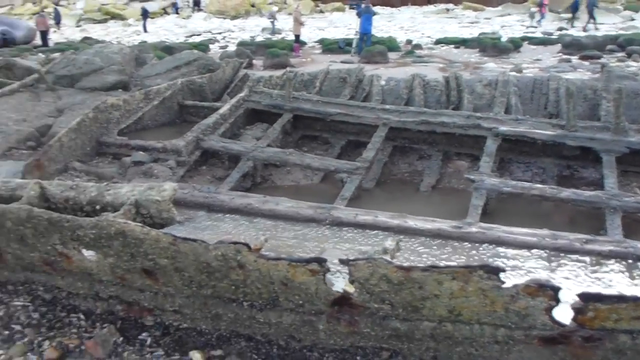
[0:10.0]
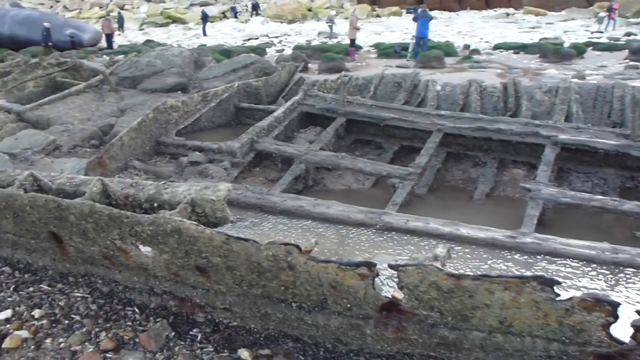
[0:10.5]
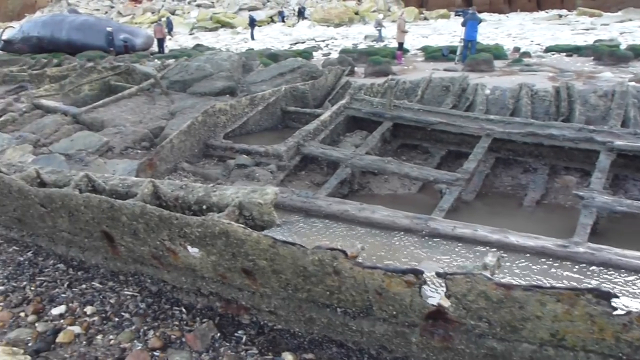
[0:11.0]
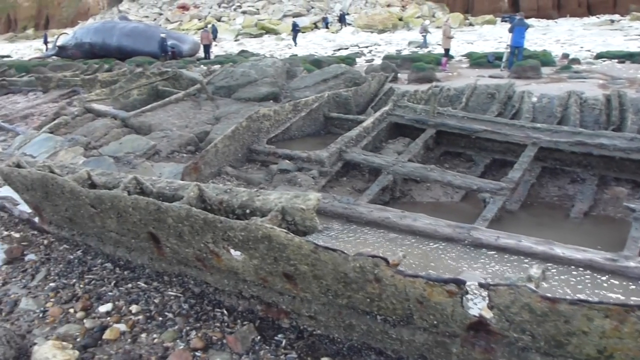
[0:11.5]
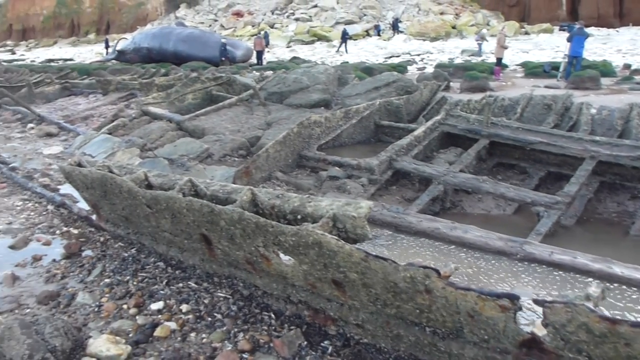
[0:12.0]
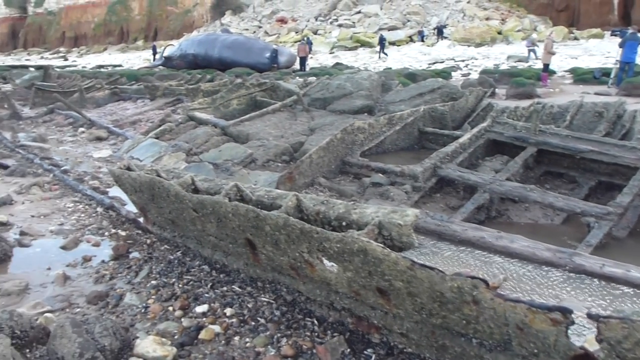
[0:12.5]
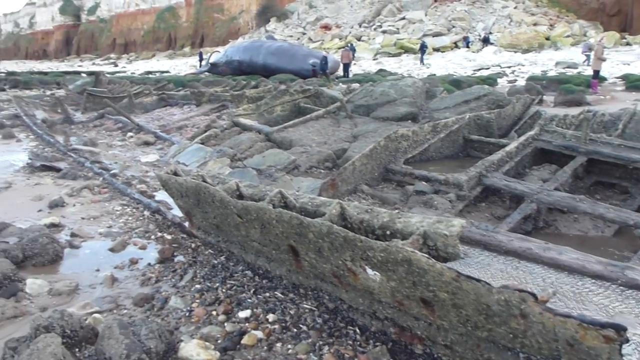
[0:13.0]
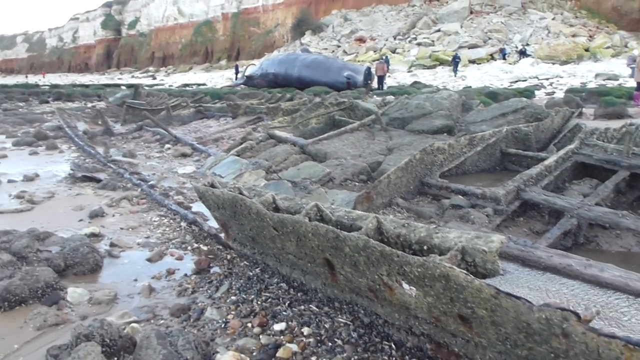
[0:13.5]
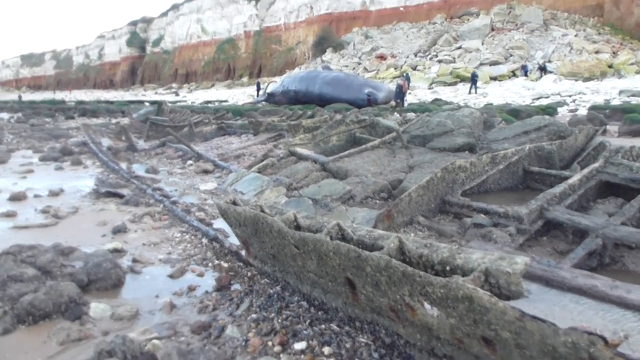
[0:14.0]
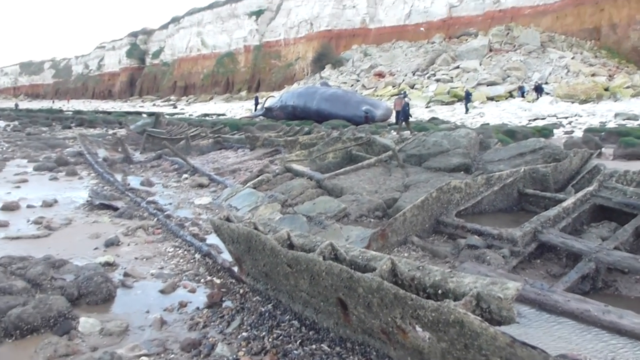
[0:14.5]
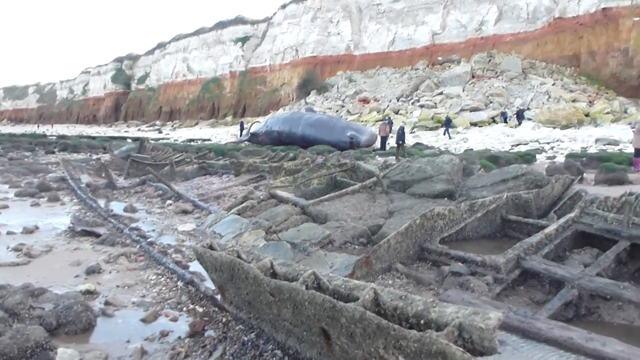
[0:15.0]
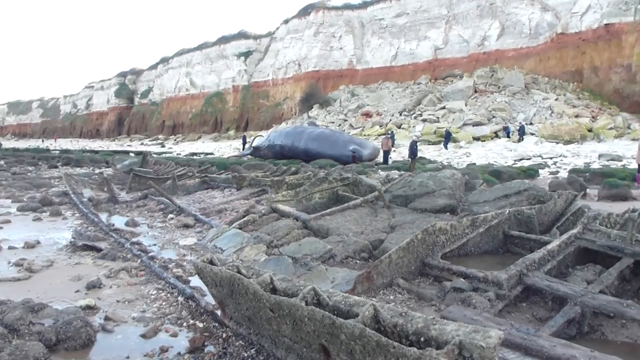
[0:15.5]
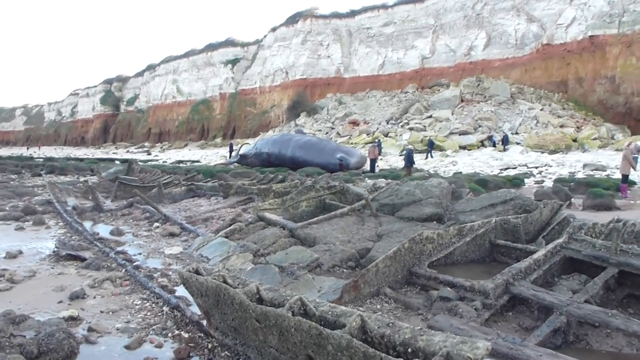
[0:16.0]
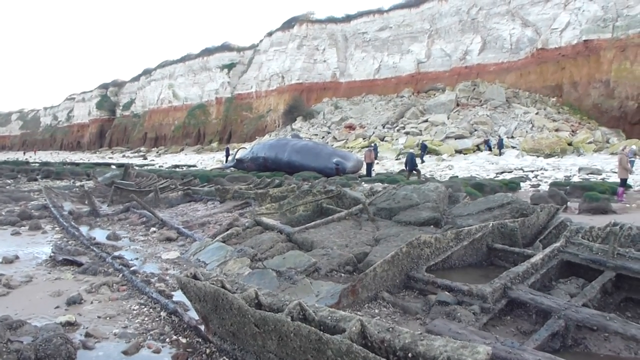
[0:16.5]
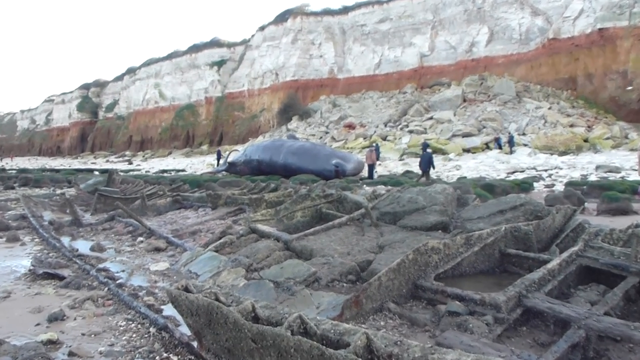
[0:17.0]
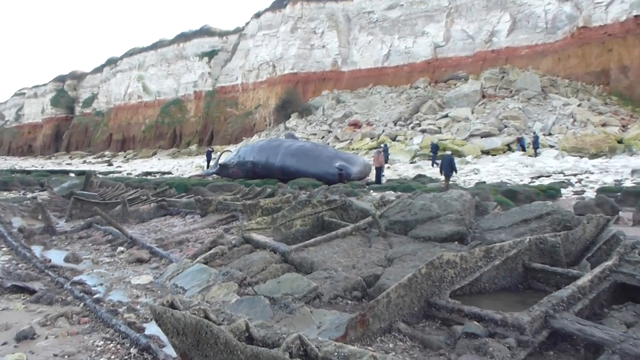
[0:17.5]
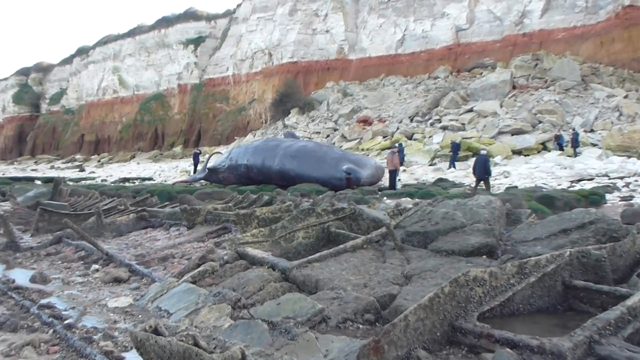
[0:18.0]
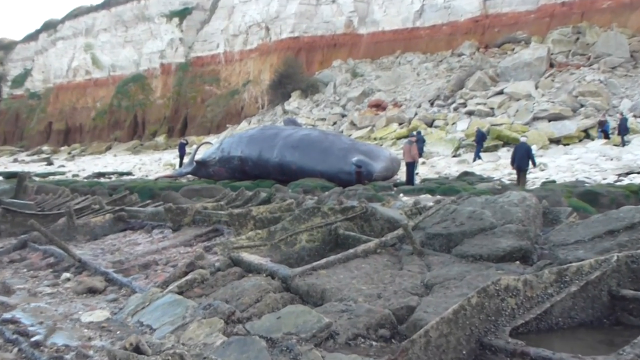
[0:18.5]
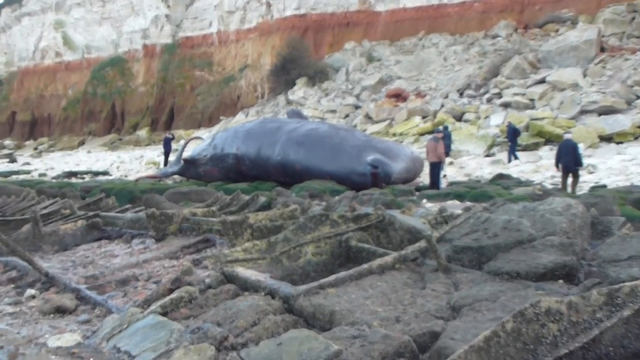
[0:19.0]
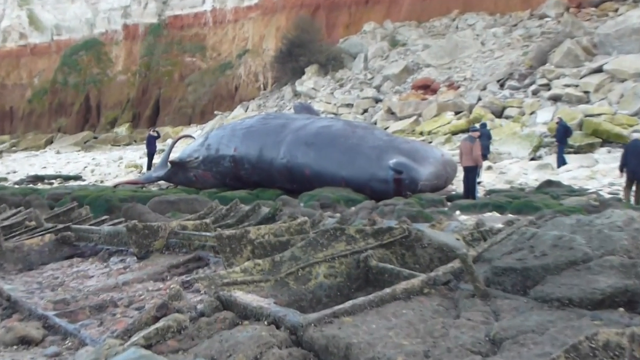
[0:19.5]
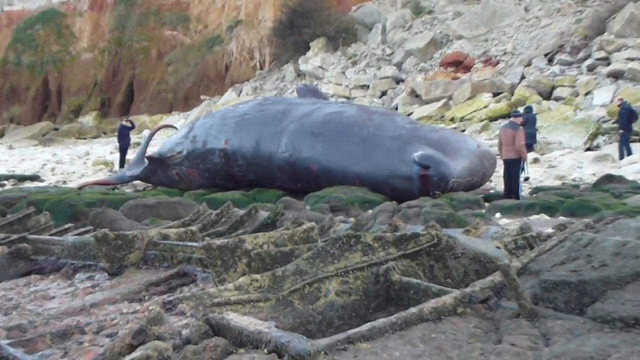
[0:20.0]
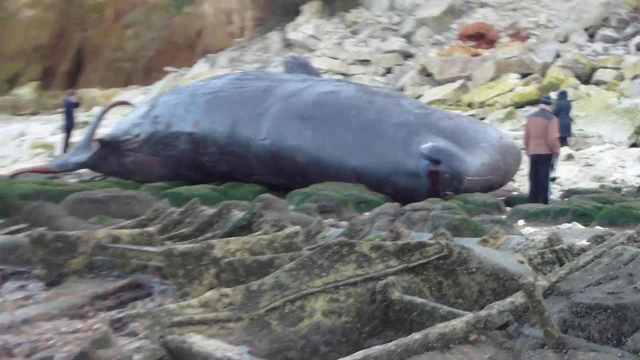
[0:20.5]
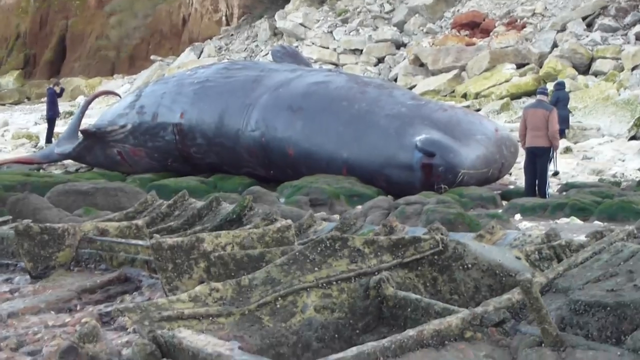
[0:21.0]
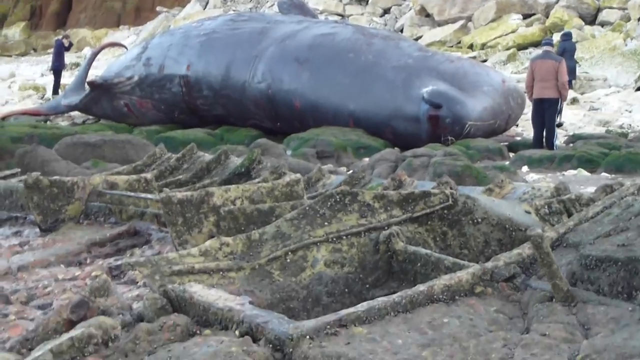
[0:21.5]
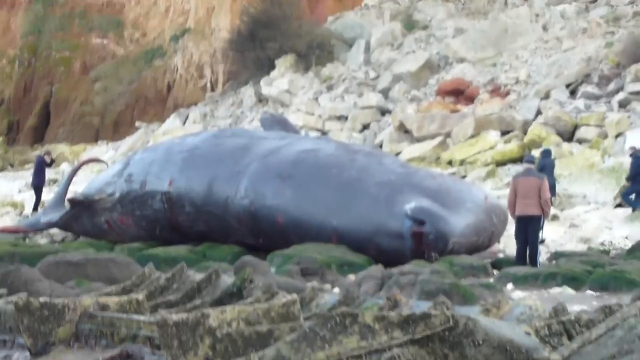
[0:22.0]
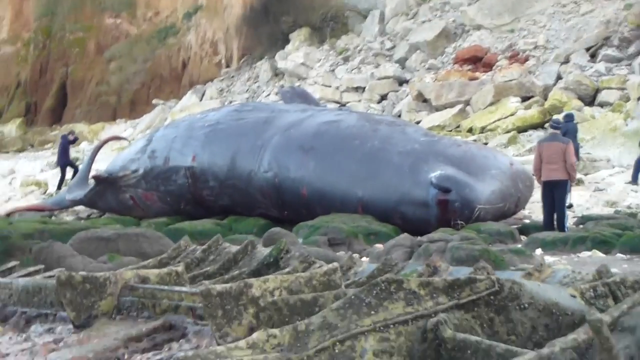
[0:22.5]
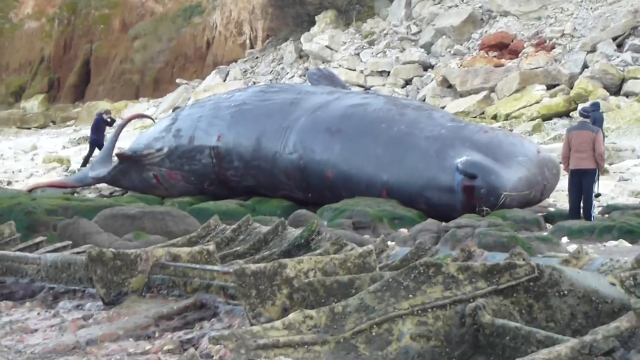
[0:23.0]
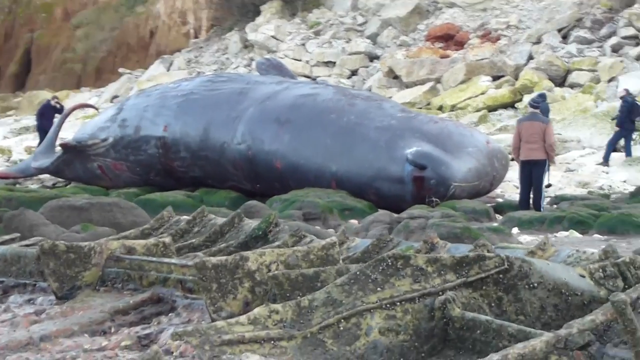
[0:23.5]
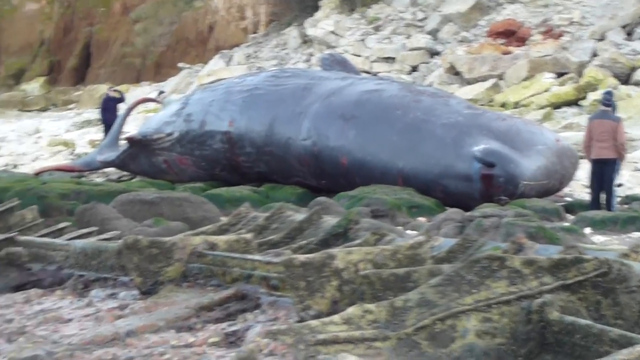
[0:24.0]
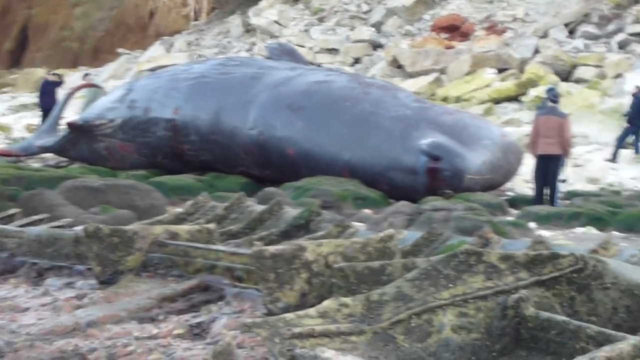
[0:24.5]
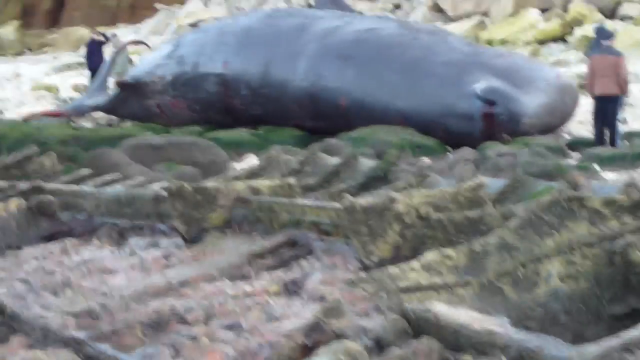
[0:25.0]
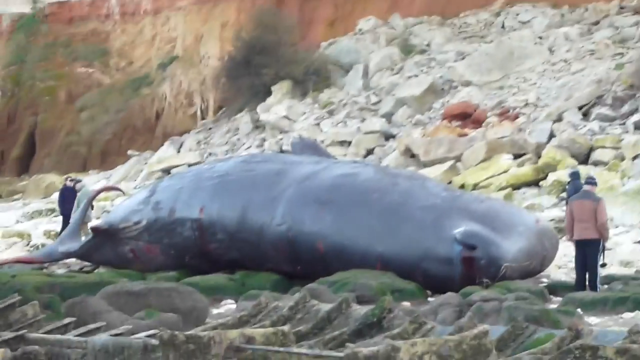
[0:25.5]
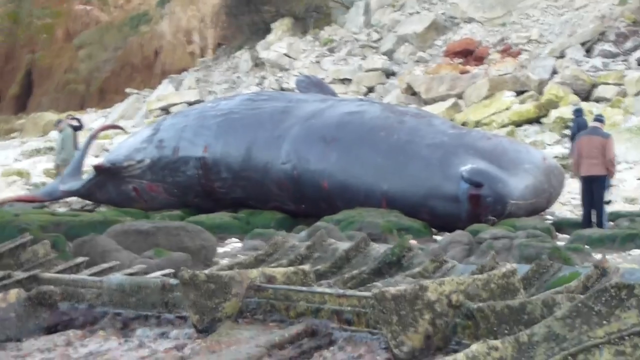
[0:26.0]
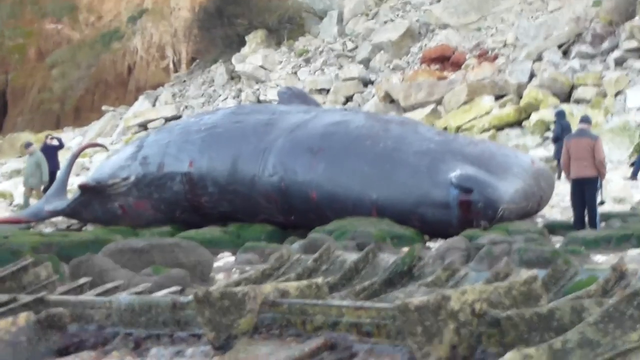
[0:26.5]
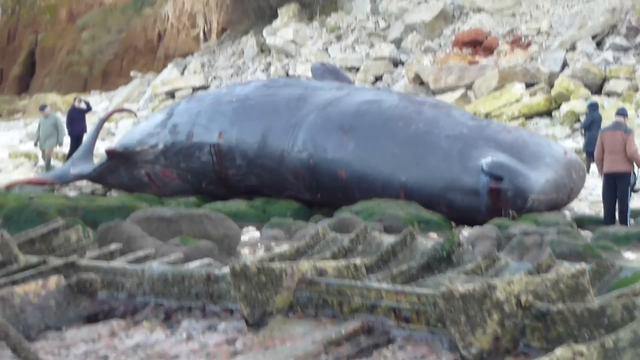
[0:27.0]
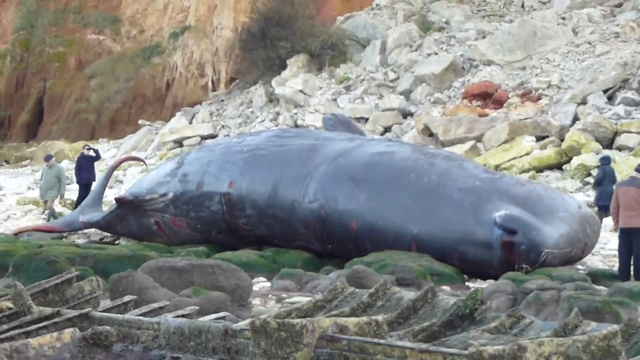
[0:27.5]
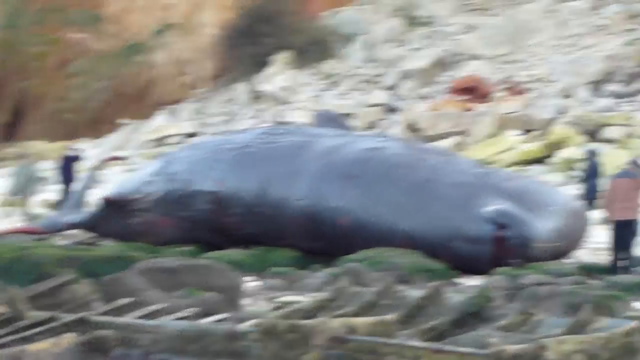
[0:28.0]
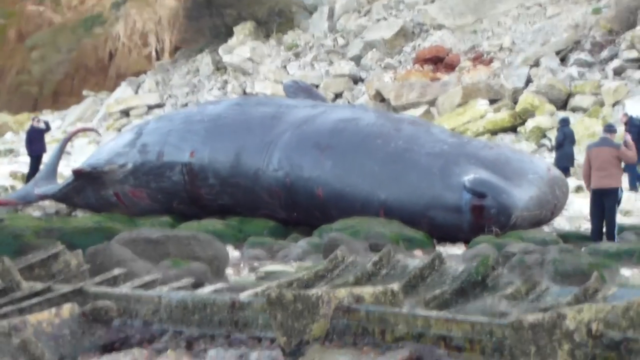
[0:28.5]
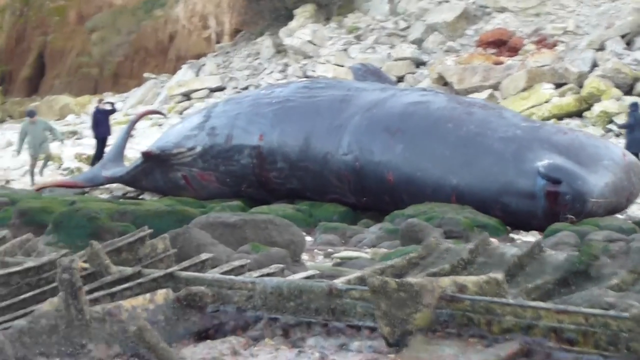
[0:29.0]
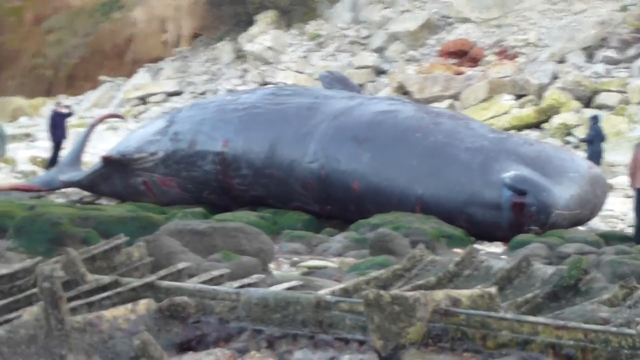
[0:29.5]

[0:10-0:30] At the base of a mountain is a rocky beach with white stones as well as gray stones beside a body of murky water. There is wreckage like an old boat that has been left to rot. From its base up to its middle the mountain is a brick red color, and from its middle to its top, a section almost equal in size, it is white. People stand around a dead whale. The top and the long side of its back are visible, and blood comes out of its nostrils. It looks stiff. The whale is large, though not huge, and dark gray, and it appears to be bloody at its tail and back area as well.